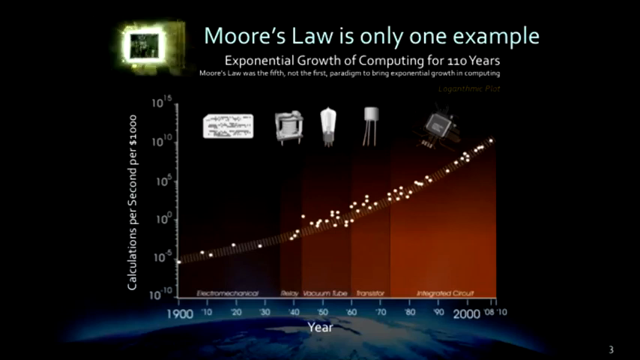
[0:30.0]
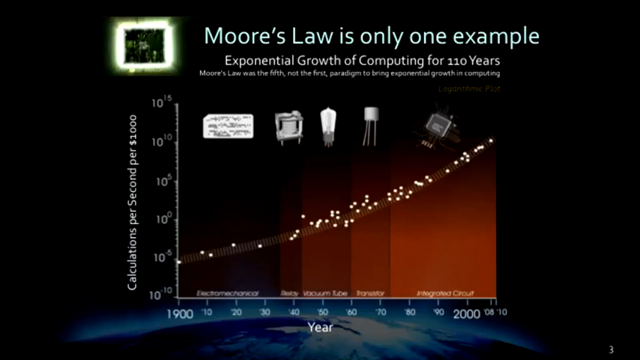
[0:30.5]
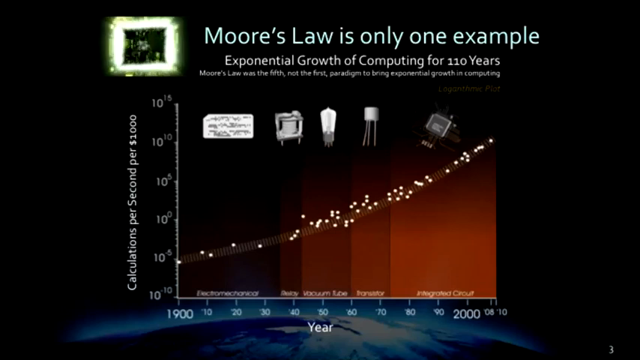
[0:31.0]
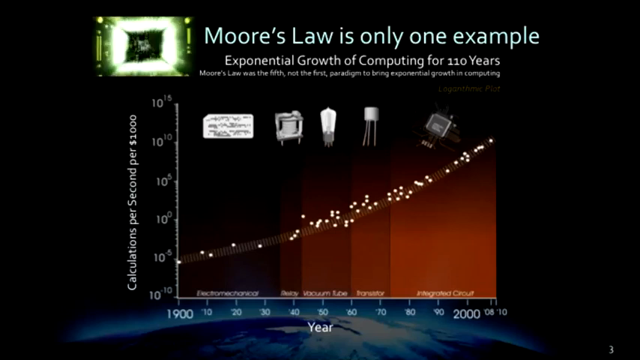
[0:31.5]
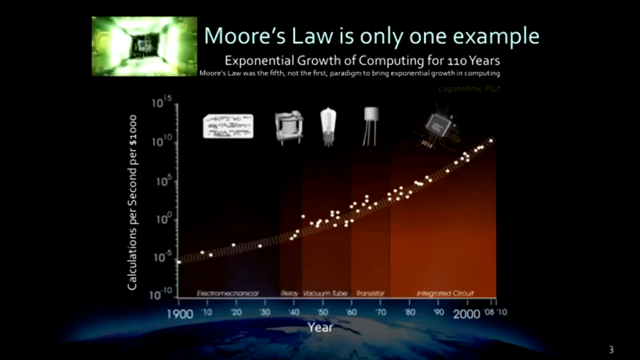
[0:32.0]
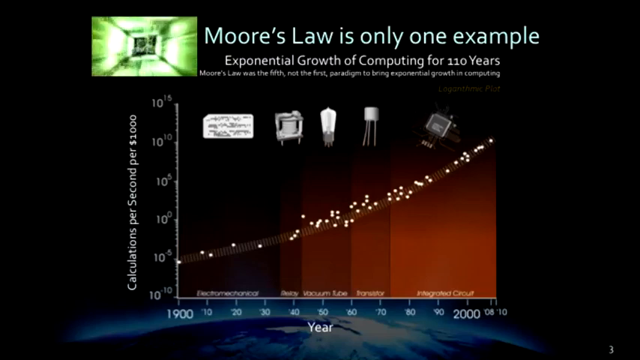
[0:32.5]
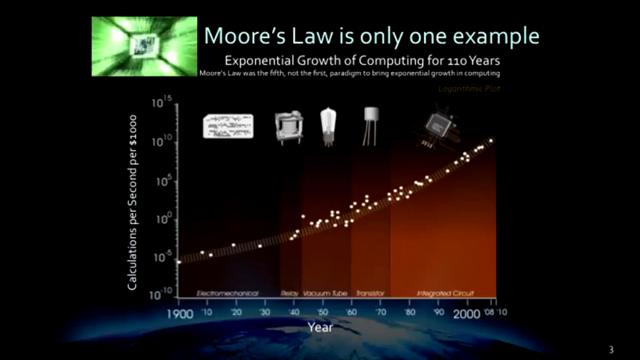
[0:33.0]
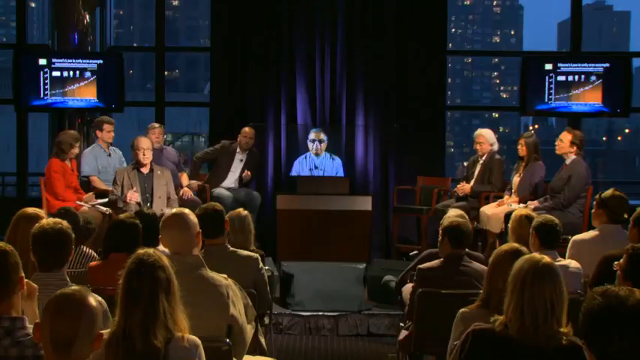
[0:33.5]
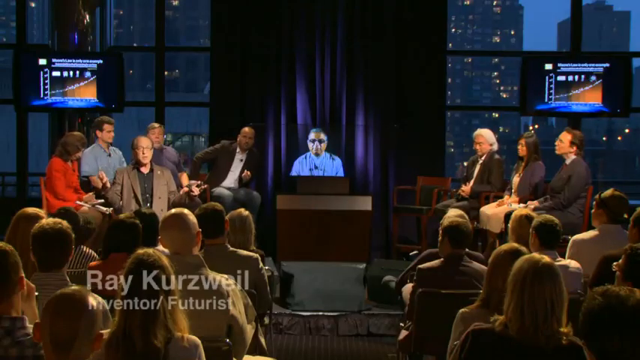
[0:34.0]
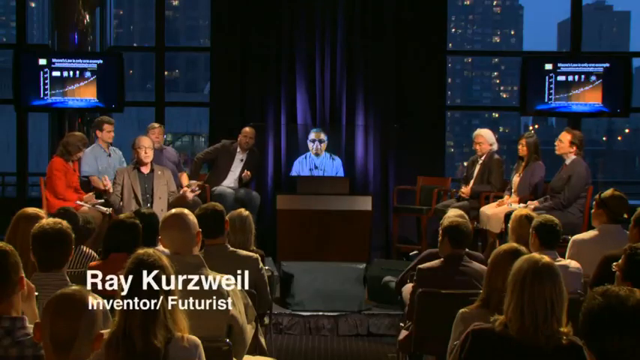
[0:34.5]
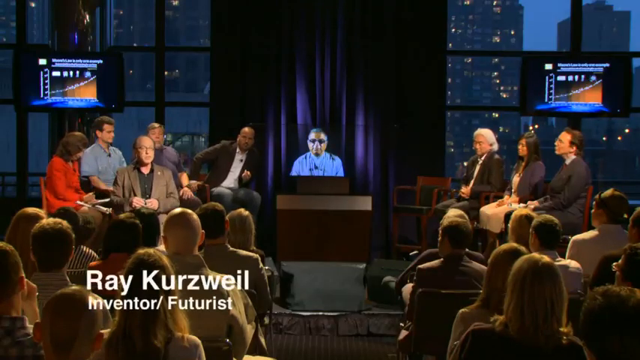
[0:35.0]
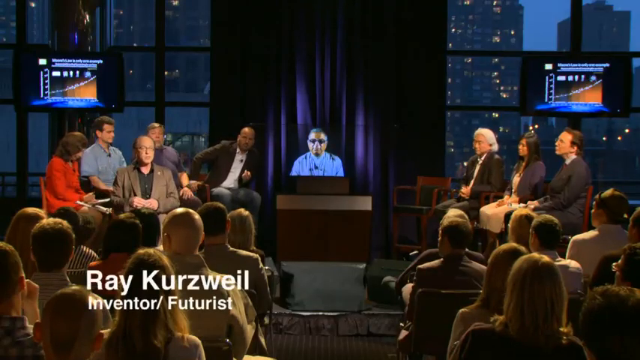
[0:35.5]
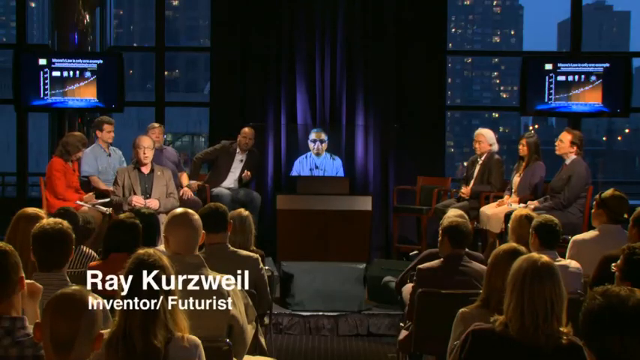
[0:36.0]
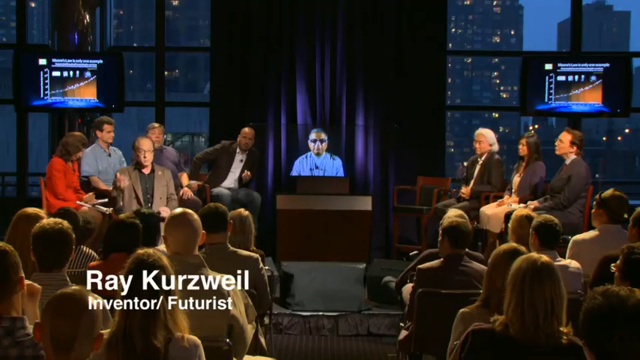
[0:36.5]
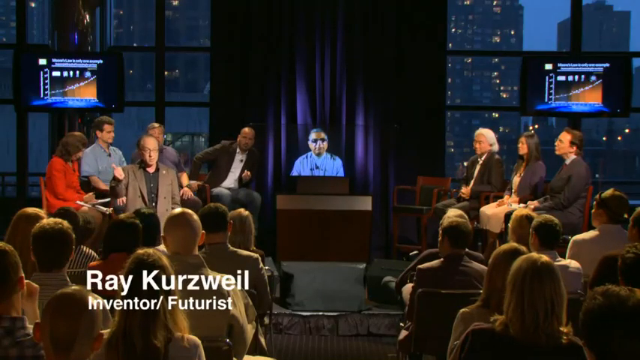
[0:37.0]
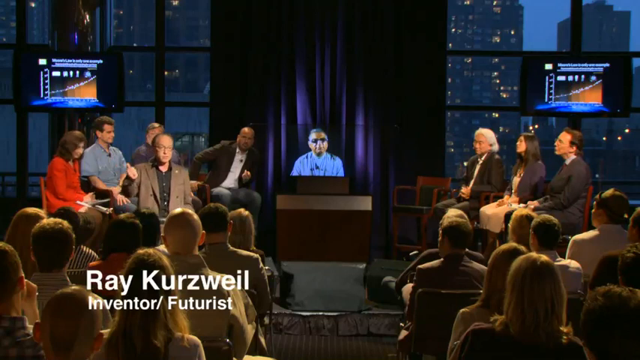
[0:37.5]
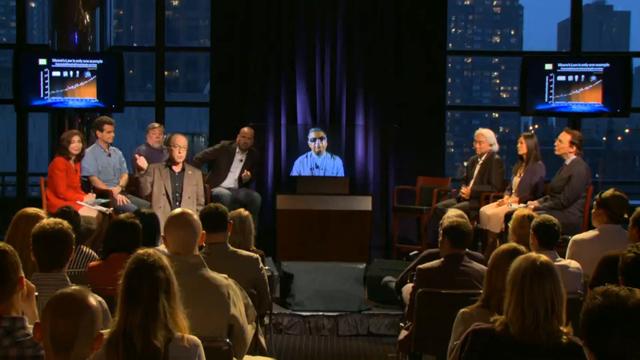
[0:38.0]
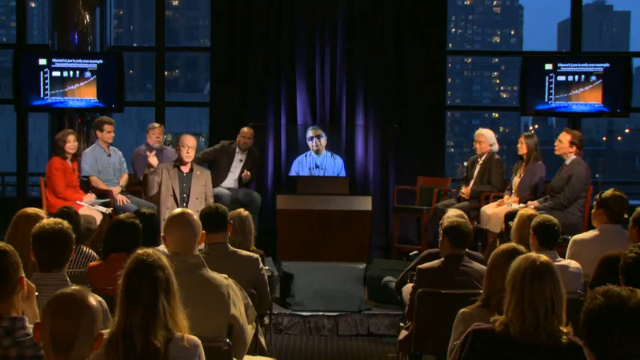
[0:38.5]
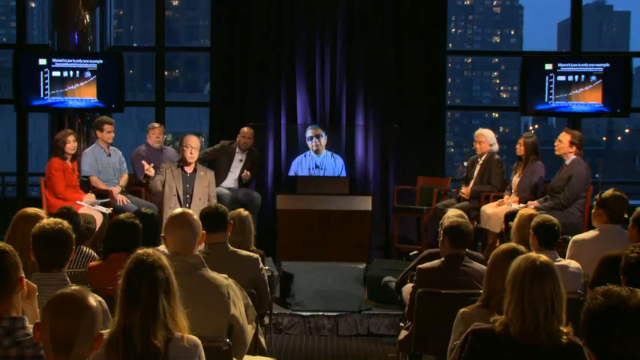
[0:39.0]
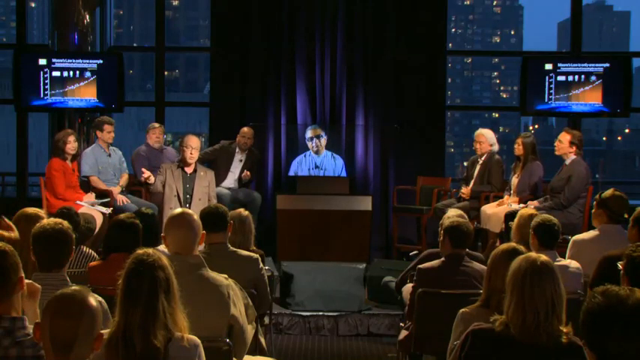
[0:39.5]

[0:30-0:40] The Moore's Law slide is on screen, then the video cuts to someone talking to a group, seen from the back of the group so that the backs of everyone's heads are visible. Text identifies the speaker as "Ray Kurzweil, inventor / futurist." Behind him there appears to be a panel, with three people on each side, and someone in a blue shirt on a TV projection behind him. Screens on the left and right walls both show the same graph, an upward-increasing graph with orange underneath and black on top, with some icons along the top.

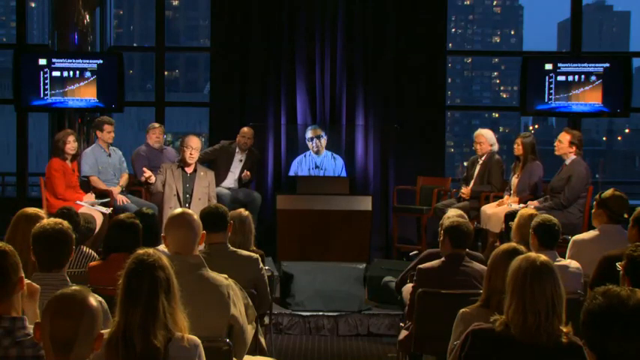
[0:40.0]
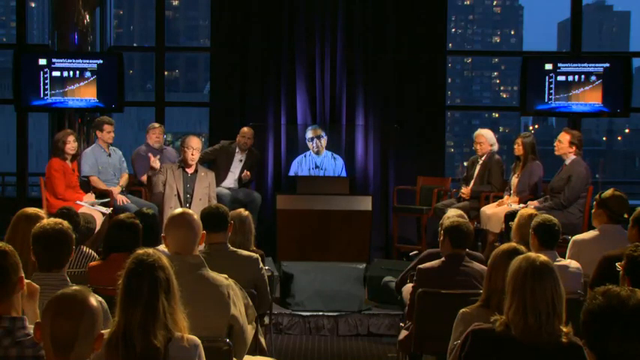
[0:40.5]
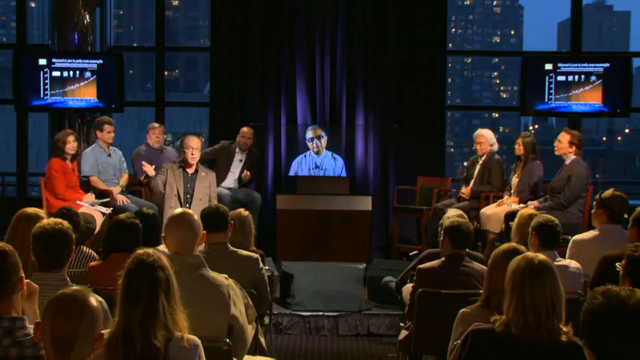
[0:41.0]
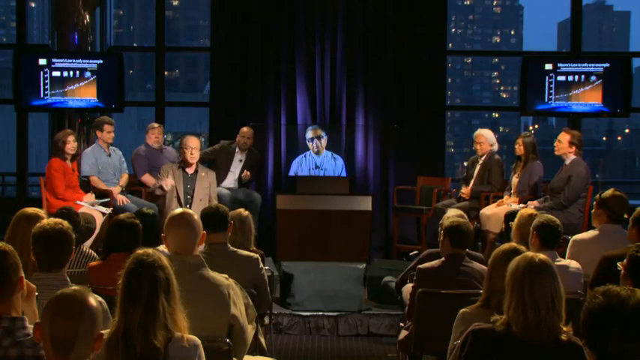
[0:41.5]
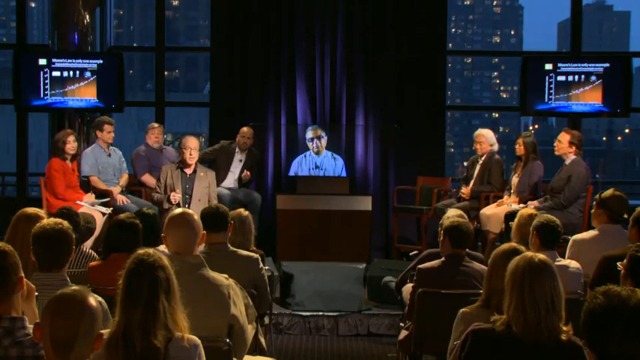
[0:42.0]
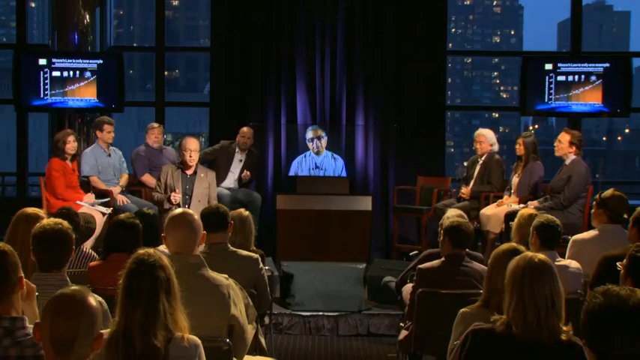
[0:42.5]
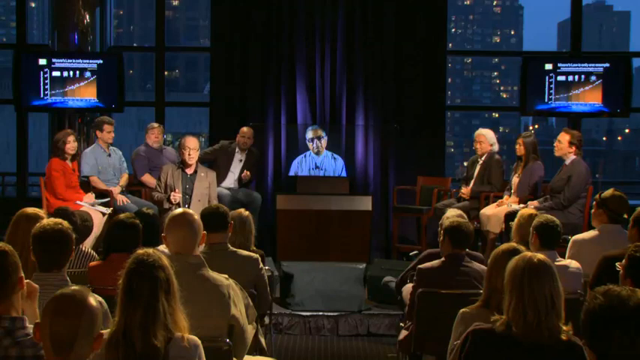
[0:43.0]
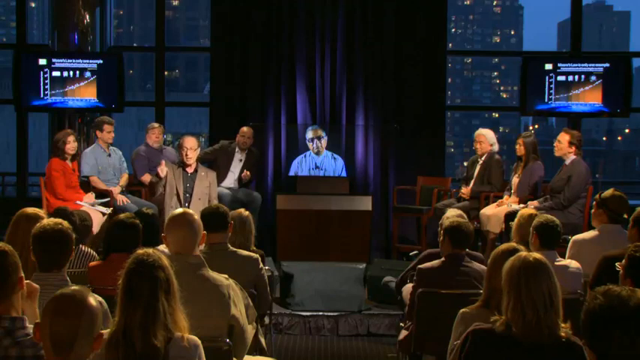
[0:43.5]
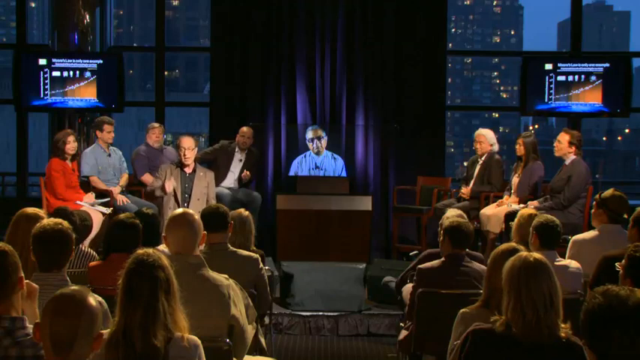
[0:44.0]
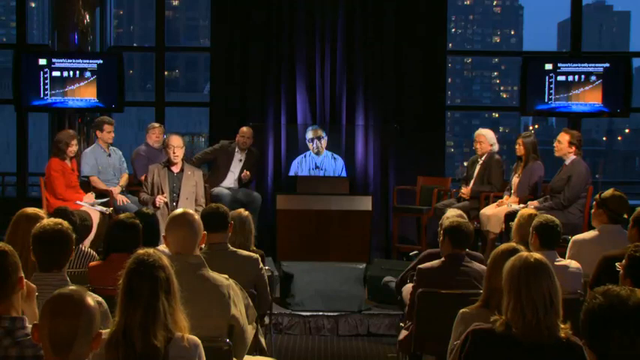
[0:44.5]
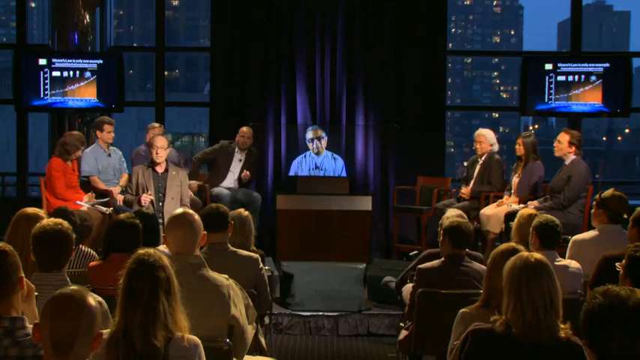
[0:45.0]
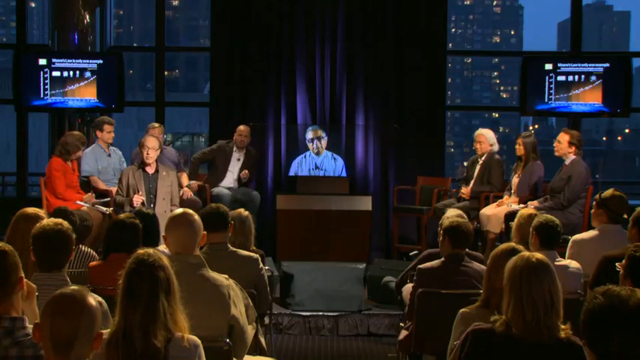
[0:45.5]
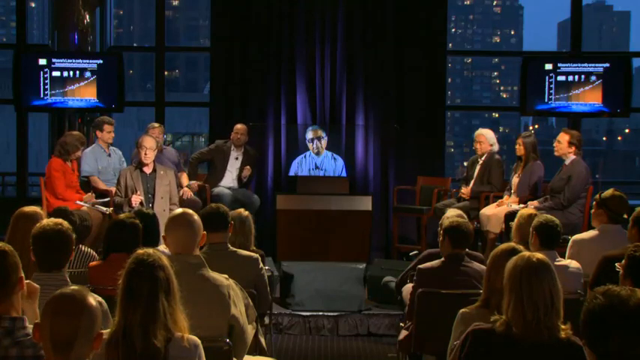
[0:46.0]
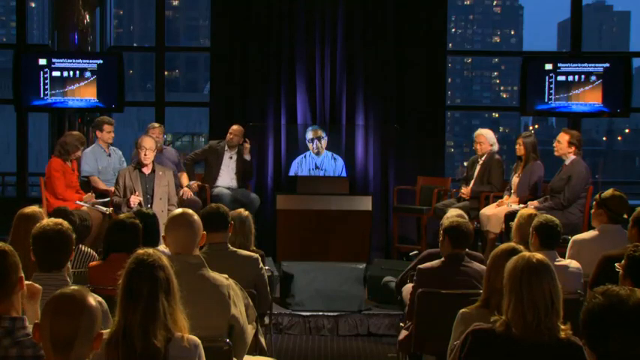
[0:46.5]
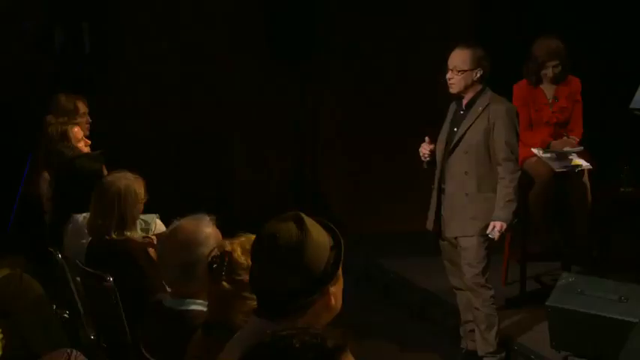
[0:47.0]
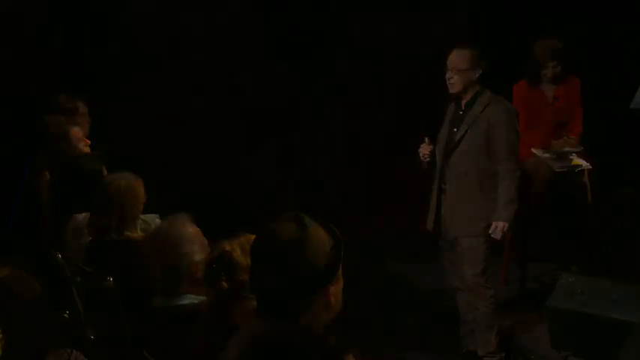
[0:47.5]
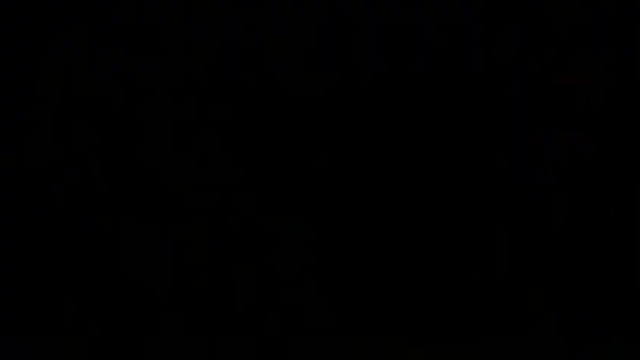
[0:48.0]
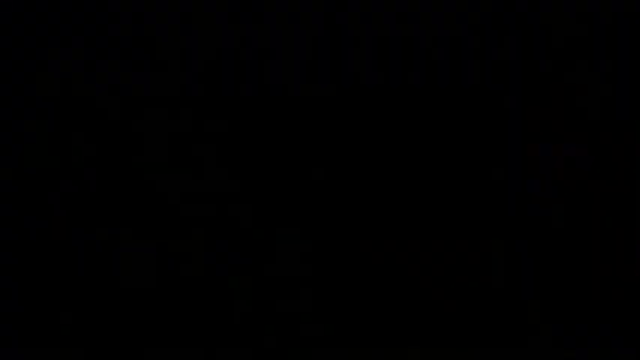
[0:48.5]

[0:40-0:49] Ray Kurzweil's lecture continues. A few people in the back move slightly, but by and large the audience is stationary; only one person appears to be moving, and the others are almost completely stationary. The view then shifts to a different angle, still showing Ray Kurzweil.